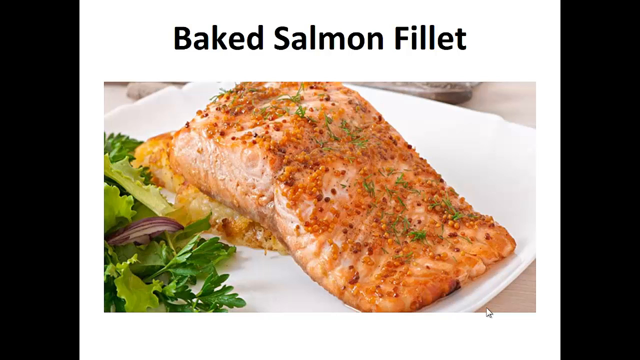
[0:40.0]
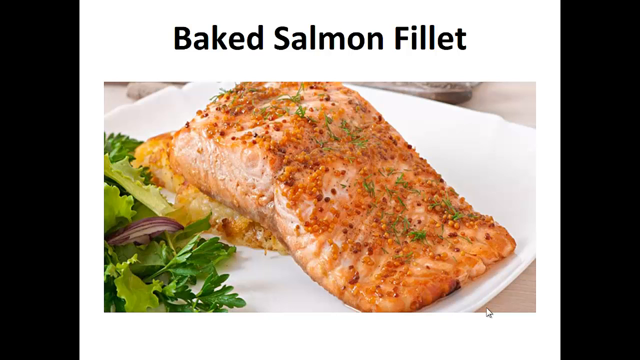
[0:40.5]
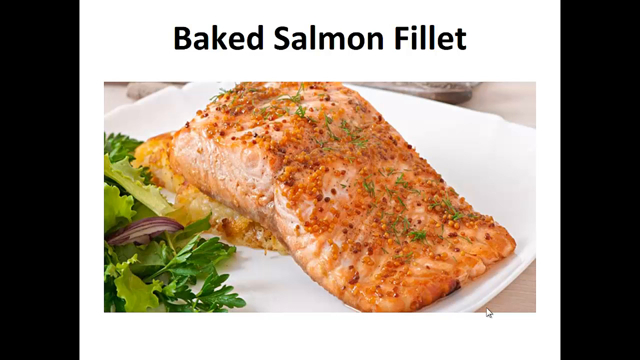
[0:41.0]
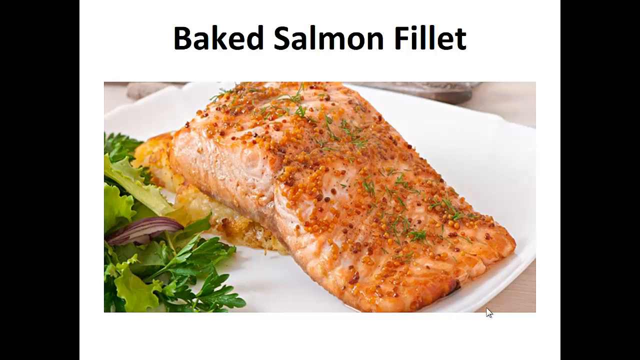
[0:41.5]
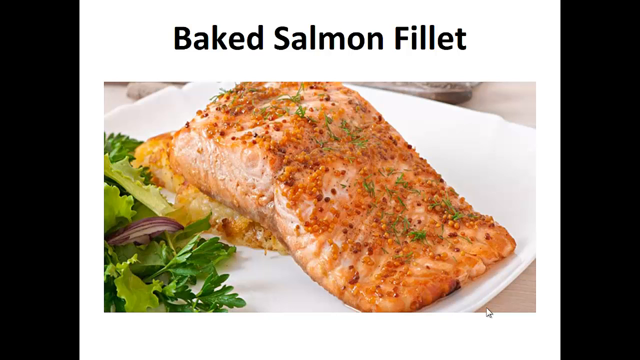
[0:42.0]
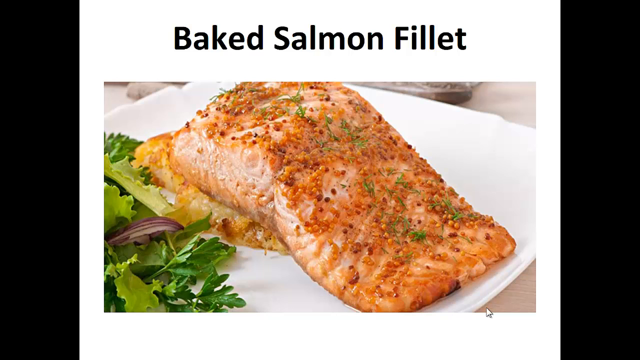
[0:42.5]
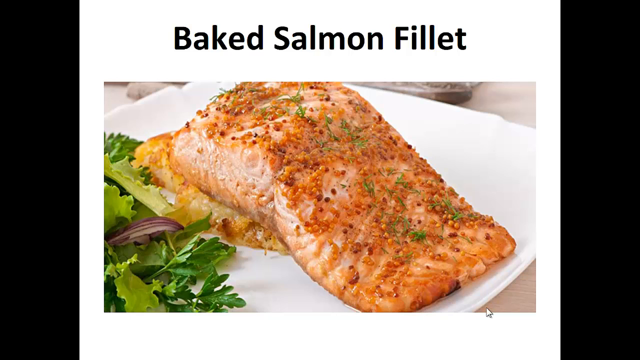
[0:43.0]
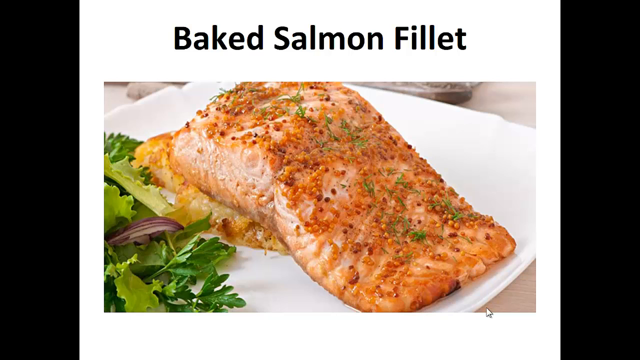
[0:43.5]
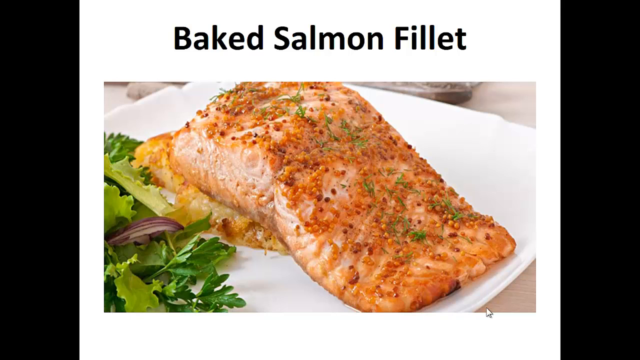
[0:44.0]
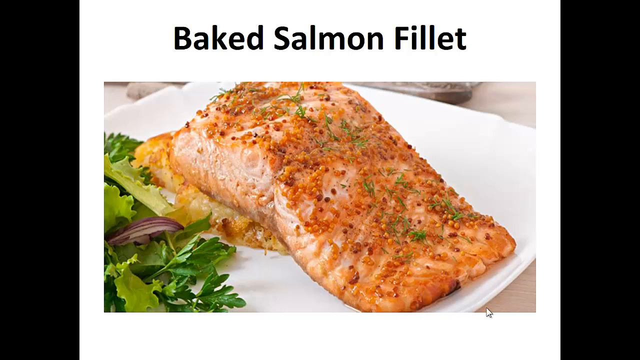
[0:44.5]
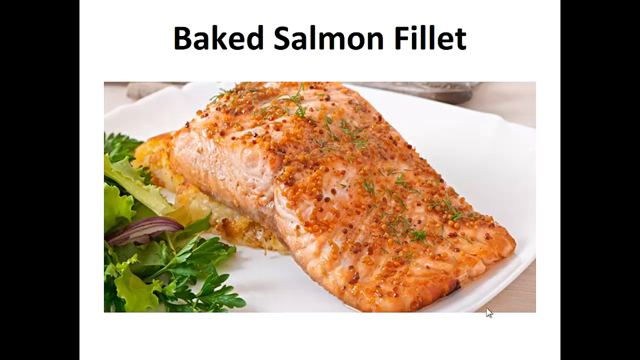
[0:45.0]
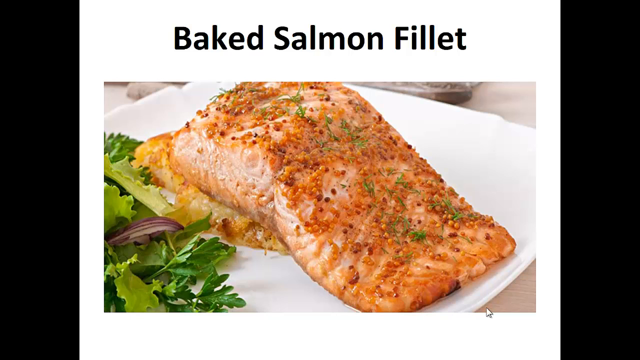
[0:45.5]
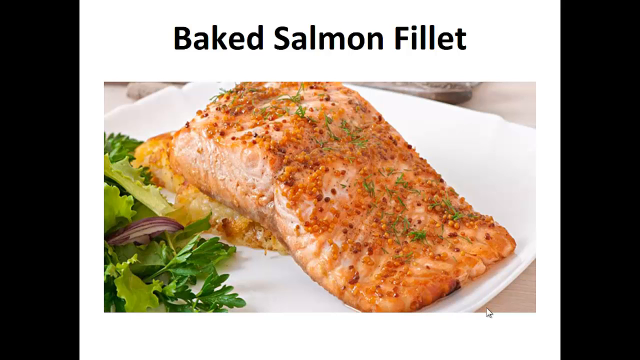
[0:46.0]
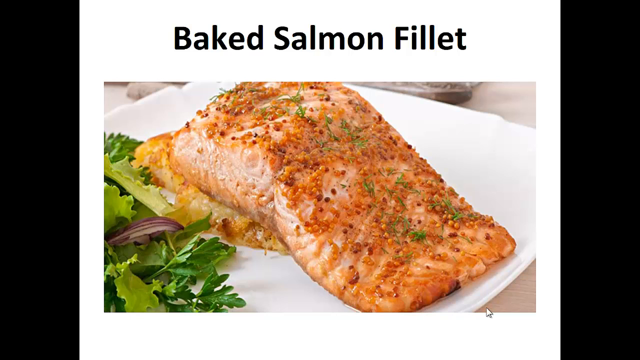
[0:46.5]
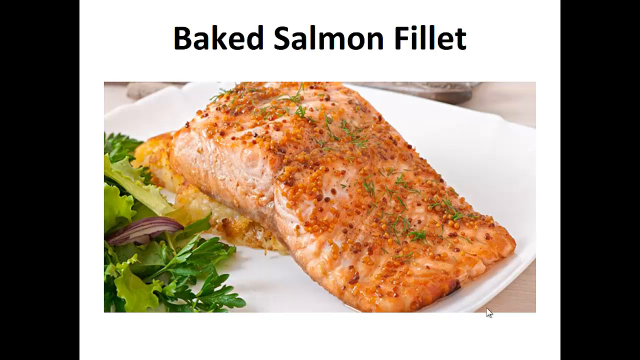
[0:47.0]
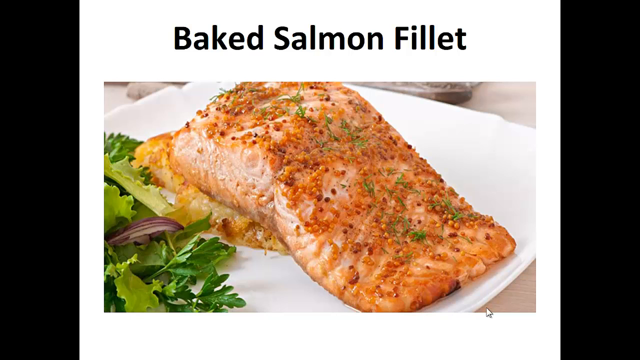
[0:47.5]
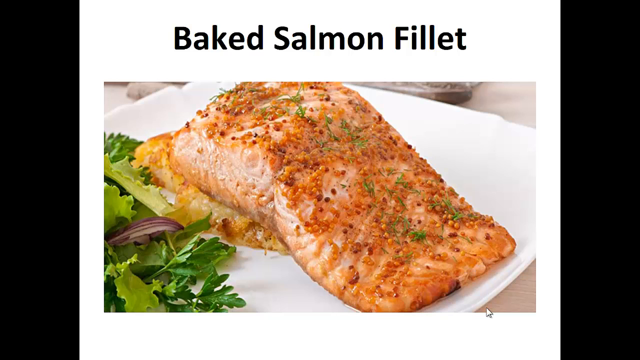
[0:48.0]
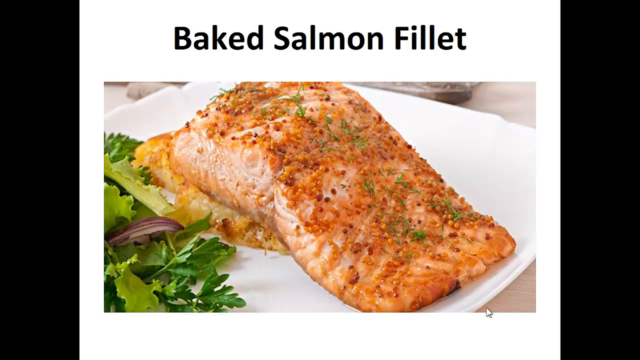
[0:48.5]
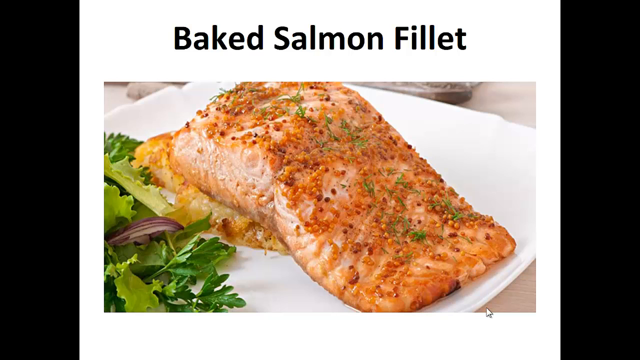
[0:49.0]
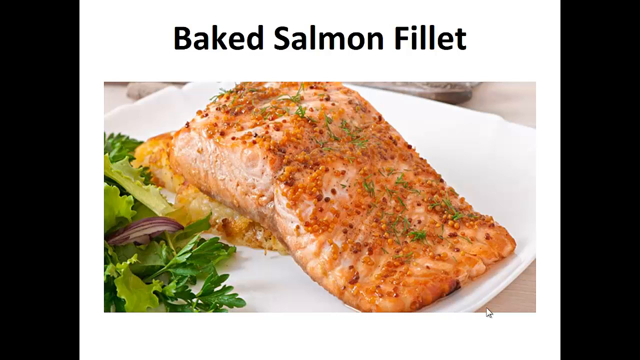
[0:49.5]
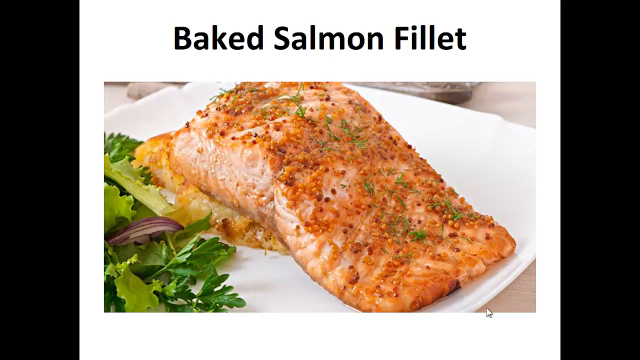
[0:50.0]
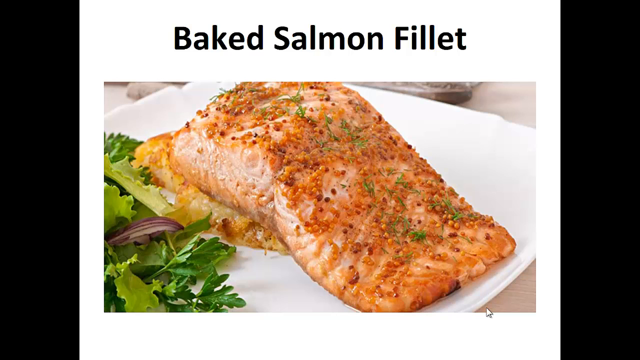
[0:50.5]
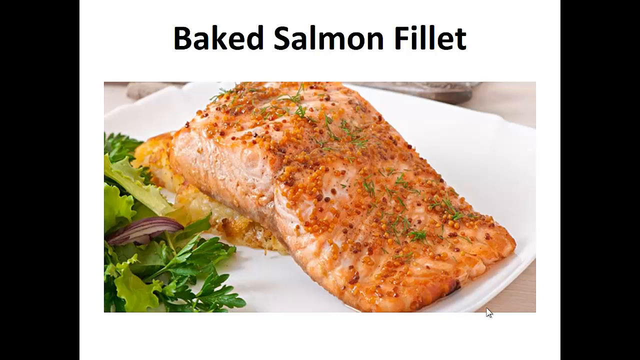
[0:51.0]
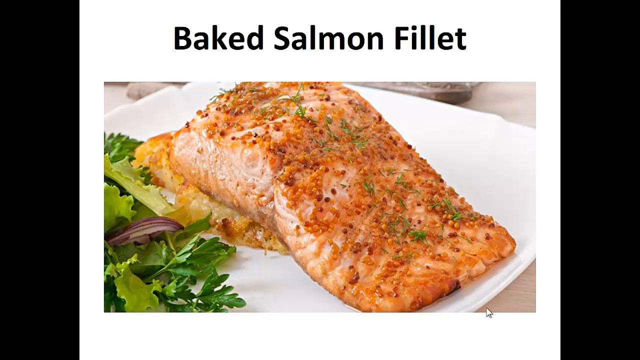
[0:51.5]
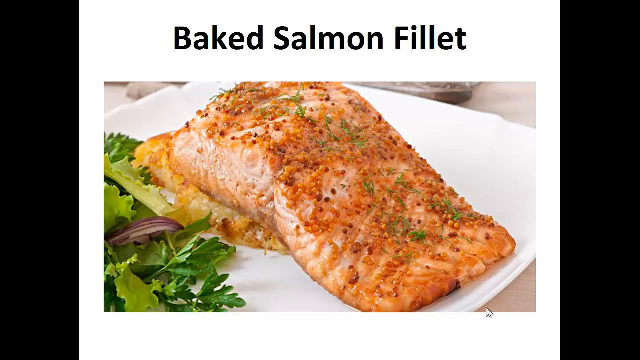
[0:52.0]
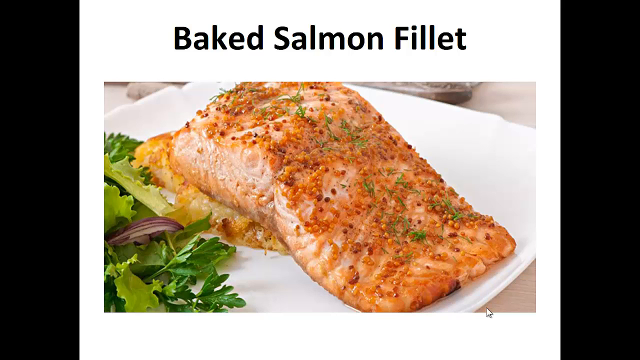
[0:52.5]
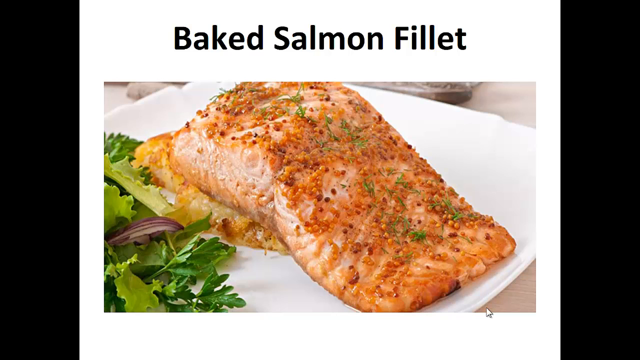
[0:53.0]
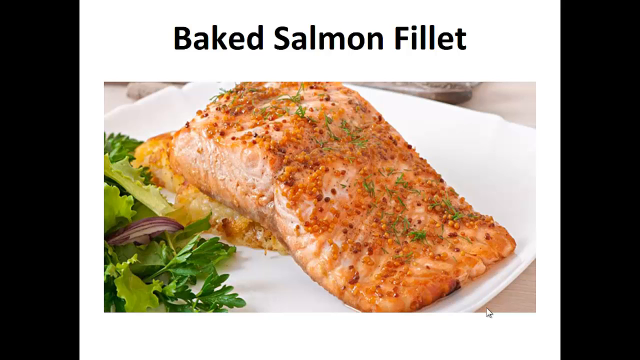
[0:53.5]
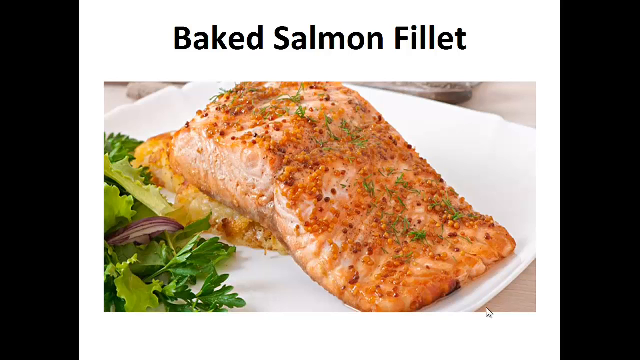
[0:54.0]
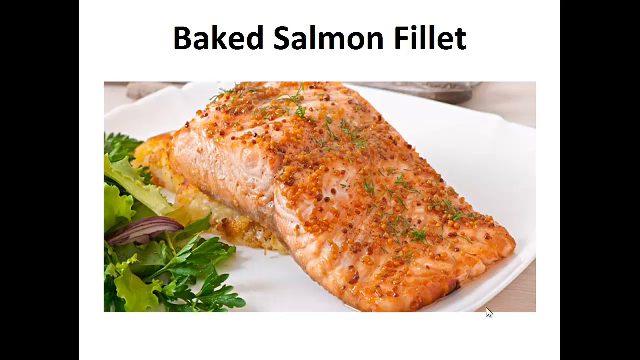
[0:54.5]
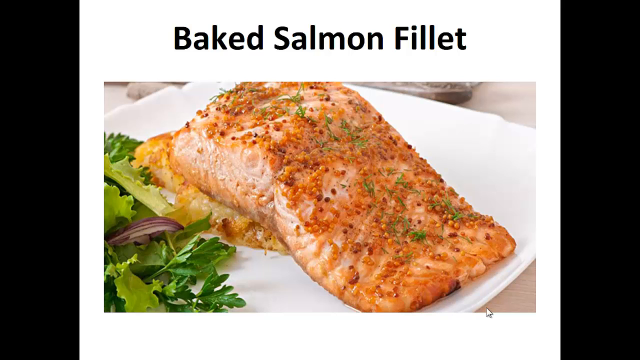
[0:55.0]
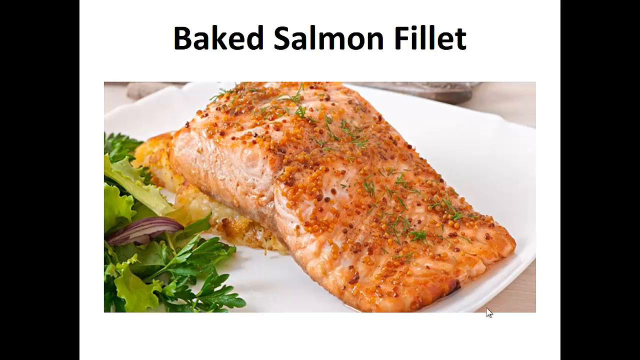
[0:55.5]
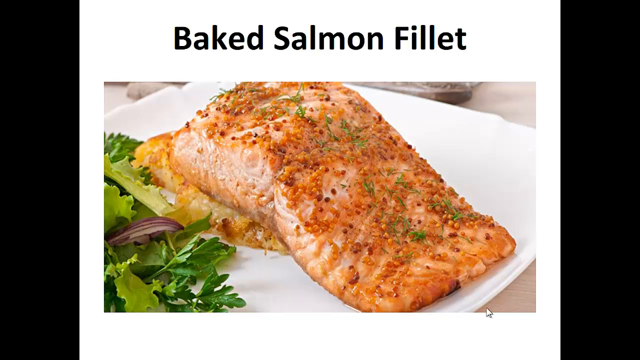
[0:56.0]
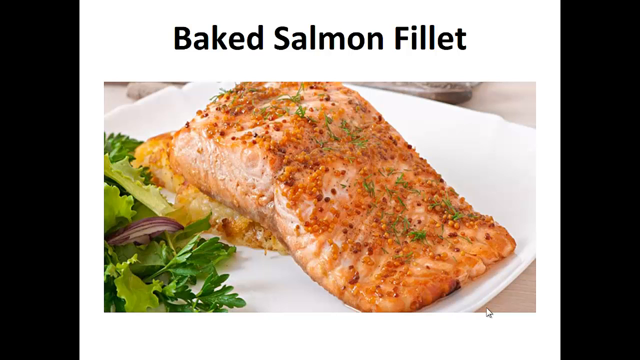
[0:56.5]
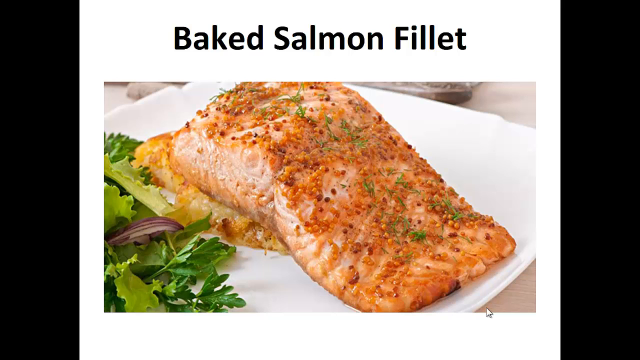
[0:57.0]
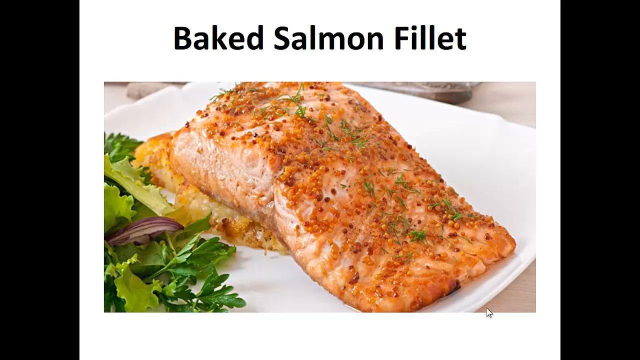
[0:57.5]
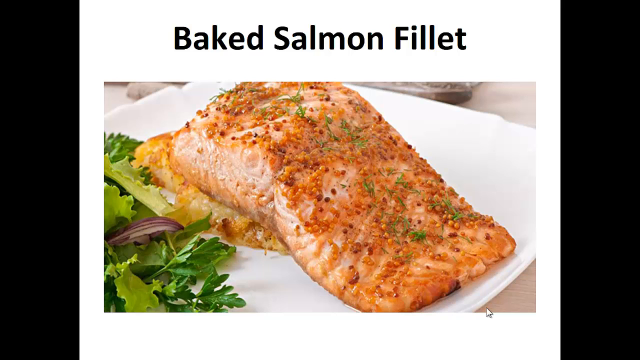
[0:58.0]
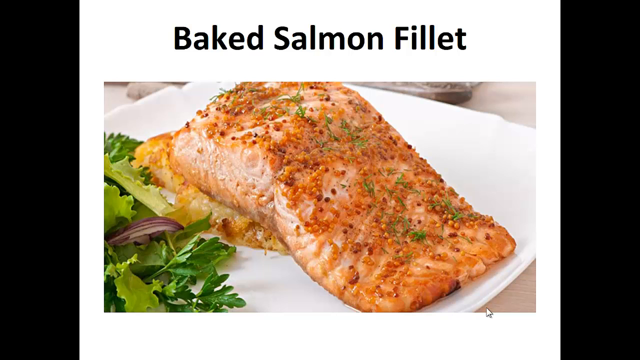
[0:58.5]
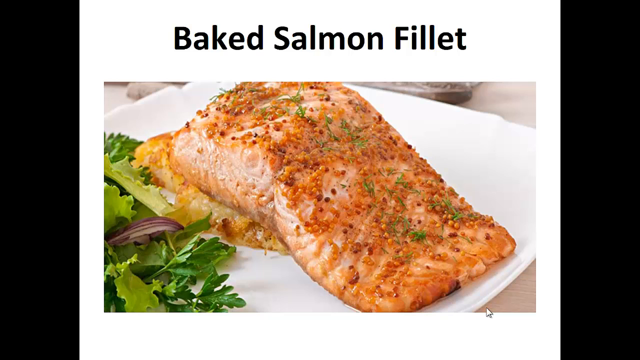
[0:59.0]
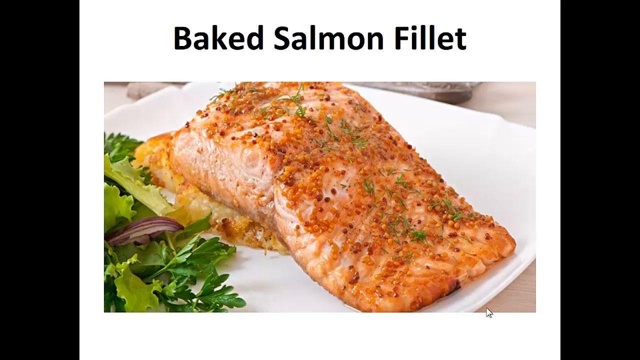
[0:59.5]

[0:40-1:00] The words "baked salmon fillet" are written in bold black on a white background above the image of the salmon. The fish appears to be seasoned with cayenne pepper or paprika, which gives the salmon a reddish or brownish tint. The salmon looks big and seems like it could serve about two people.